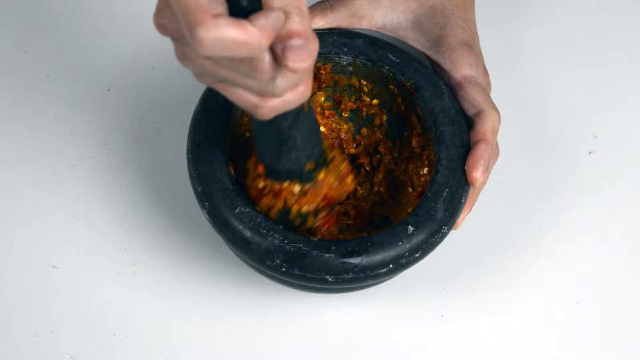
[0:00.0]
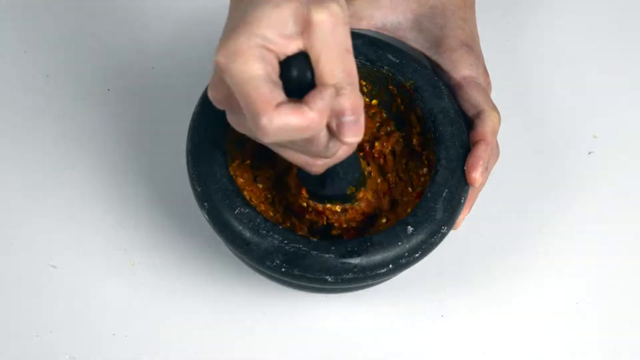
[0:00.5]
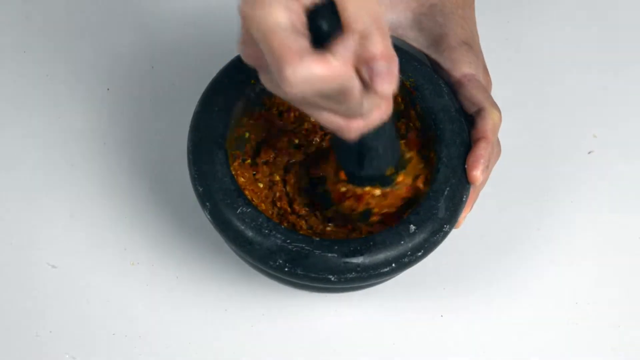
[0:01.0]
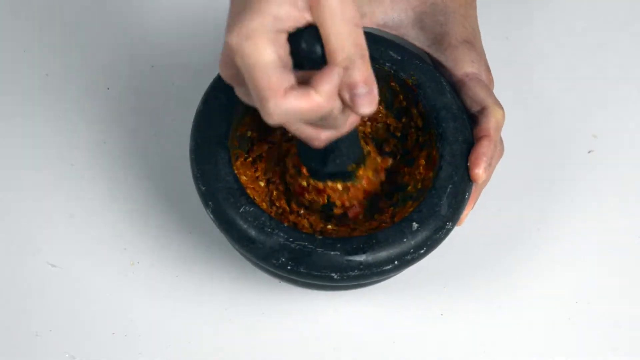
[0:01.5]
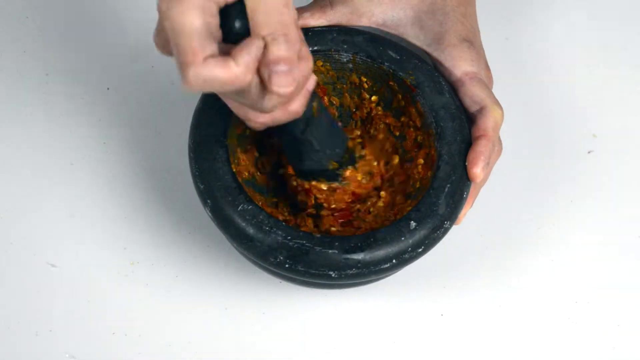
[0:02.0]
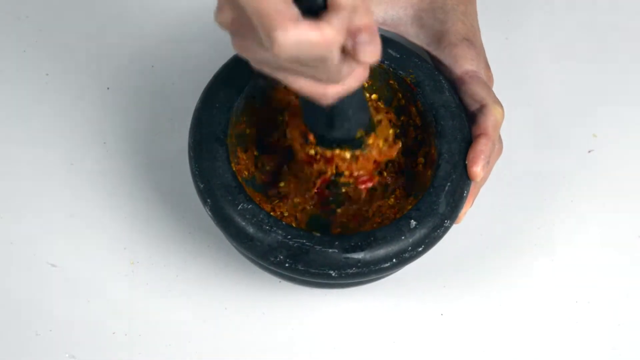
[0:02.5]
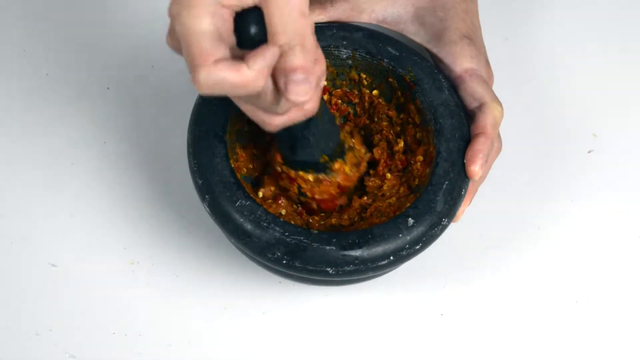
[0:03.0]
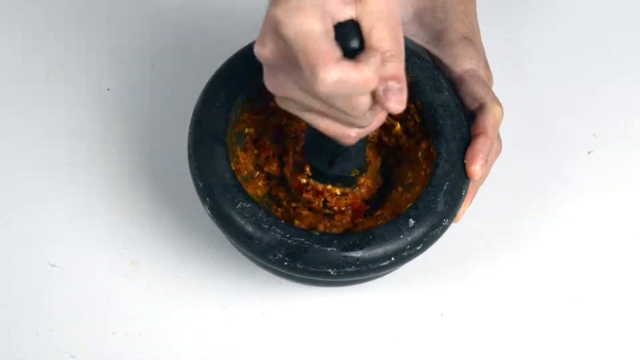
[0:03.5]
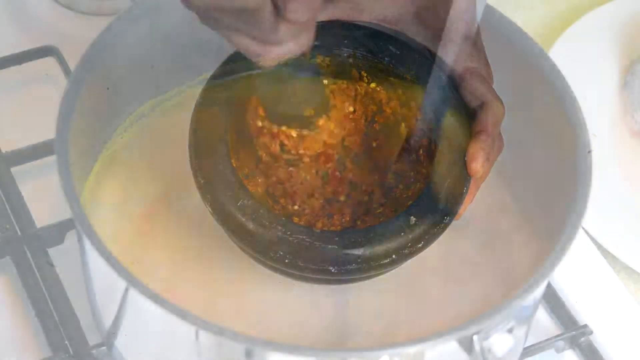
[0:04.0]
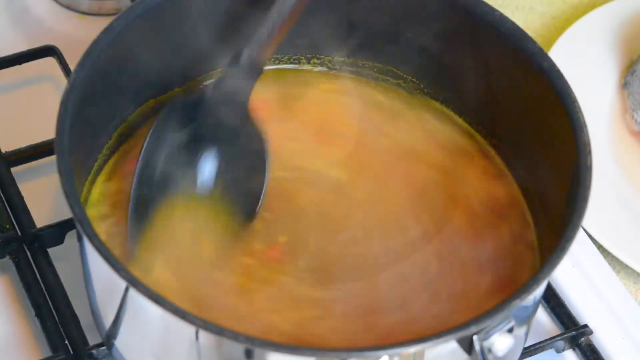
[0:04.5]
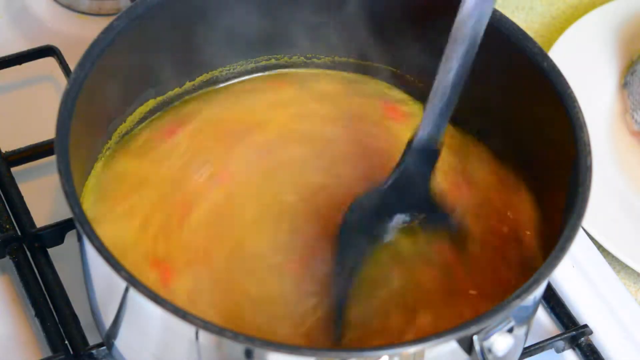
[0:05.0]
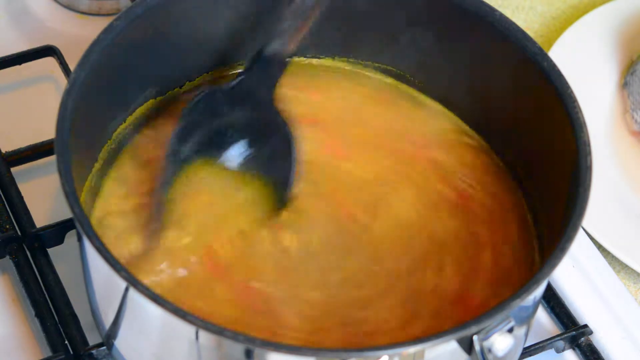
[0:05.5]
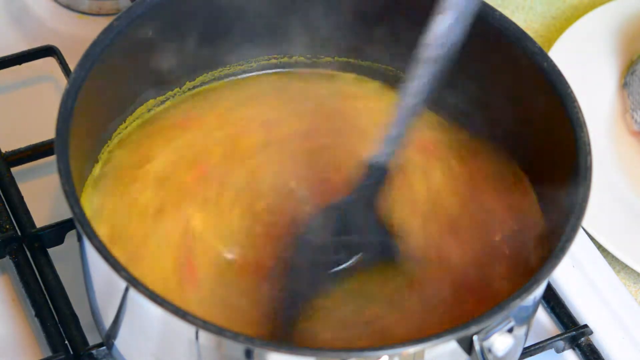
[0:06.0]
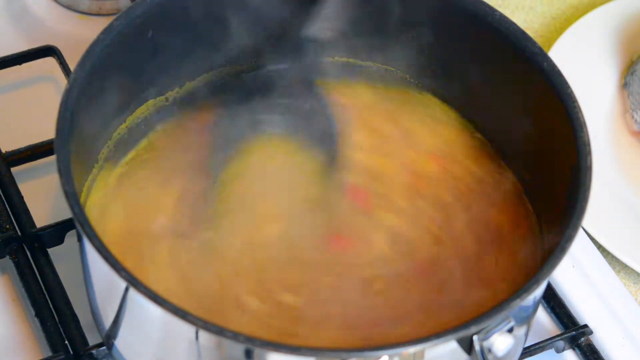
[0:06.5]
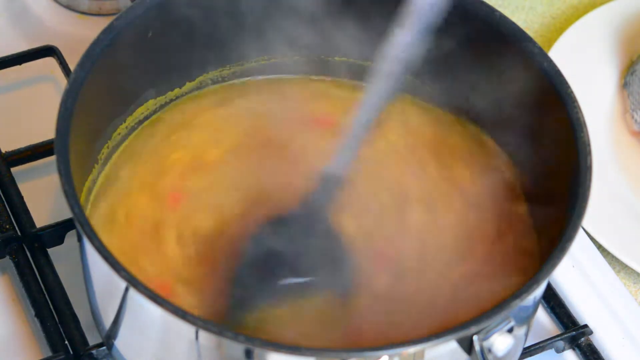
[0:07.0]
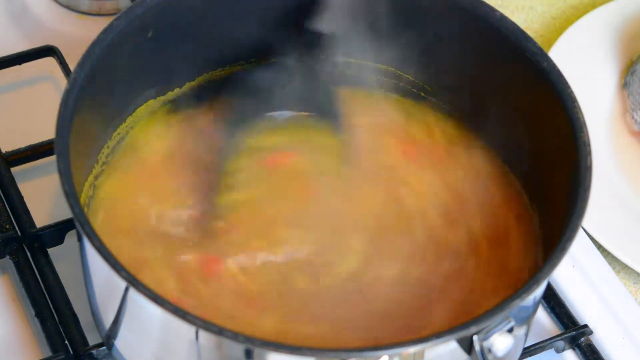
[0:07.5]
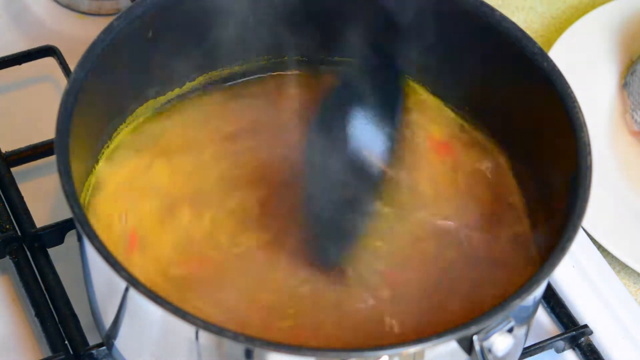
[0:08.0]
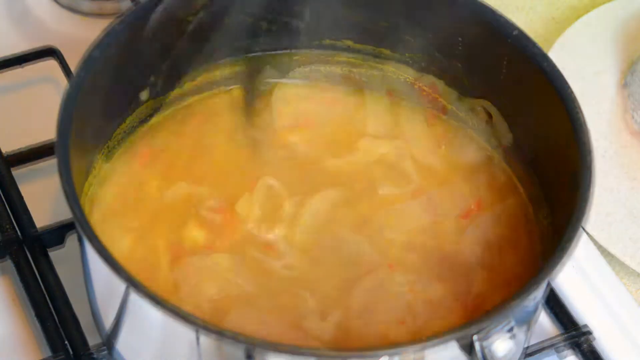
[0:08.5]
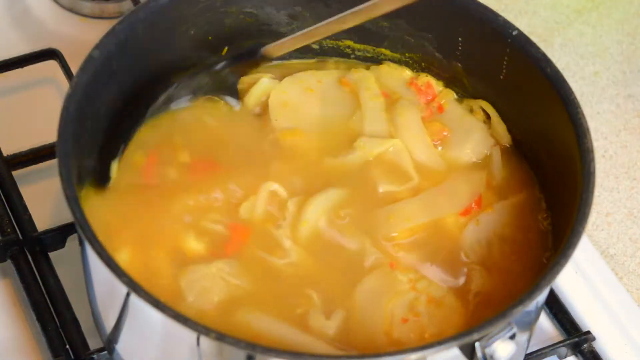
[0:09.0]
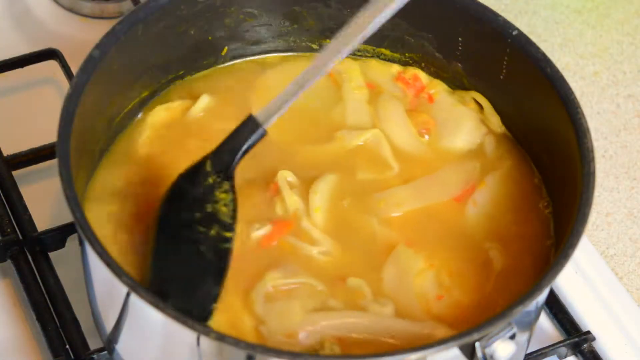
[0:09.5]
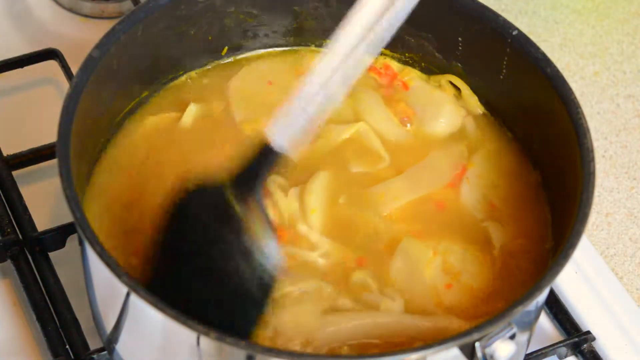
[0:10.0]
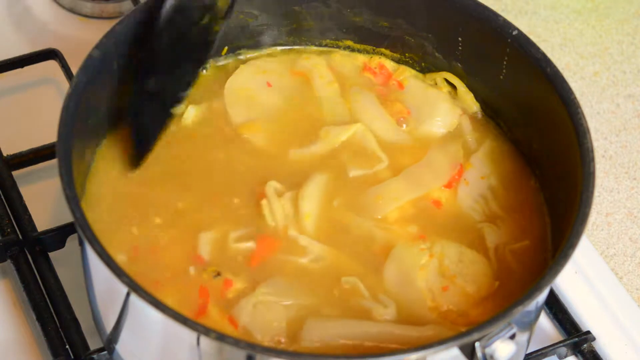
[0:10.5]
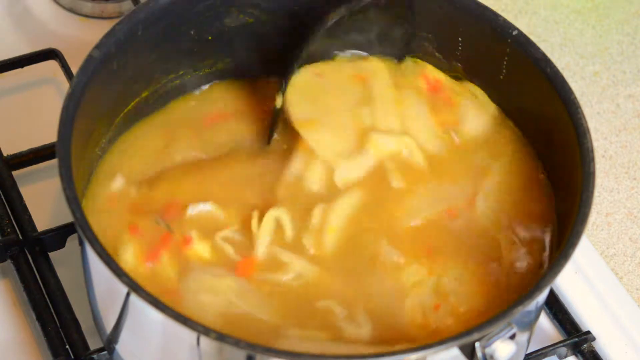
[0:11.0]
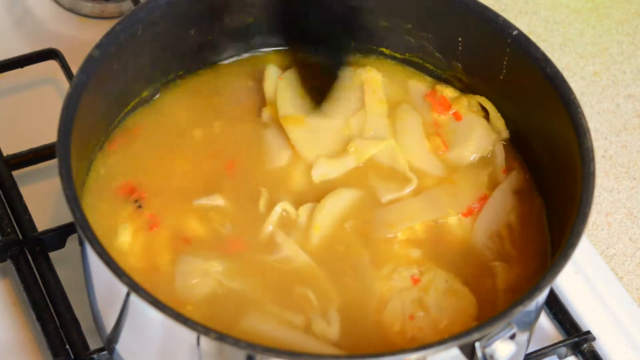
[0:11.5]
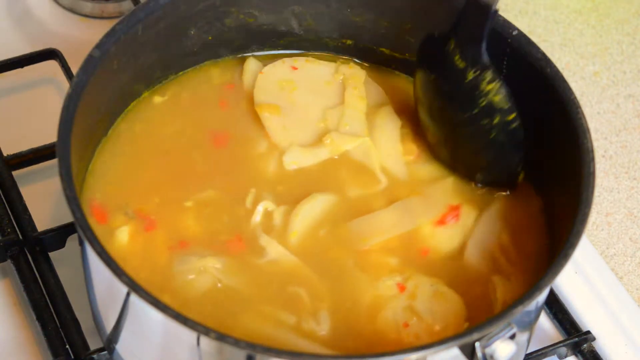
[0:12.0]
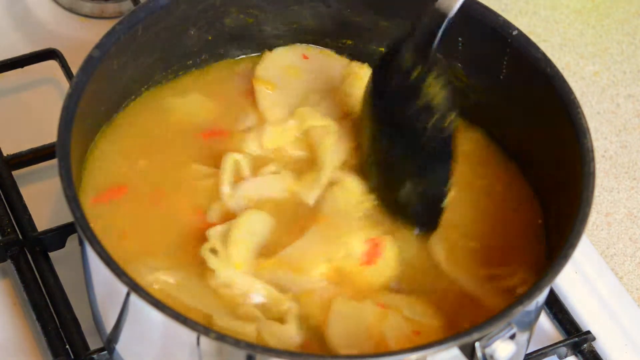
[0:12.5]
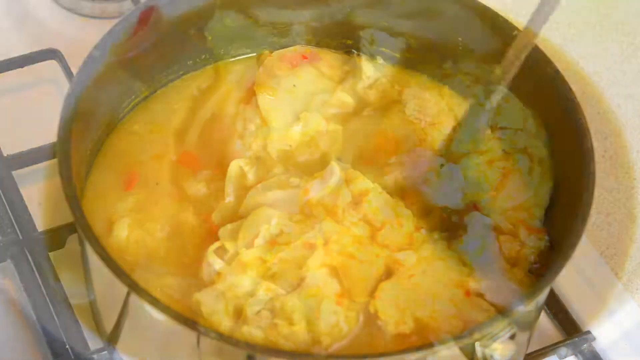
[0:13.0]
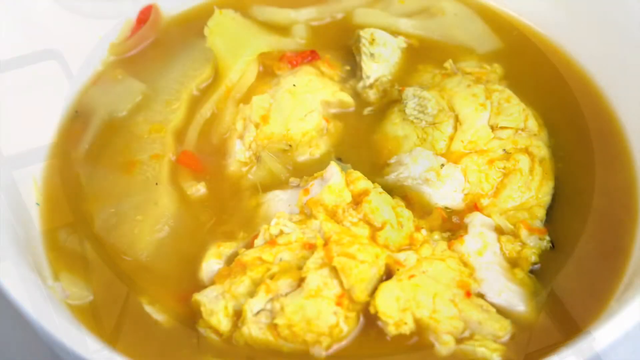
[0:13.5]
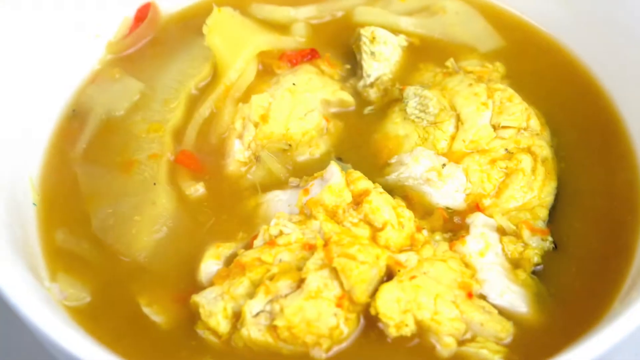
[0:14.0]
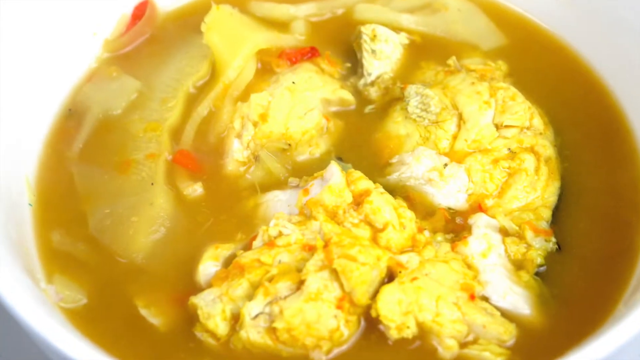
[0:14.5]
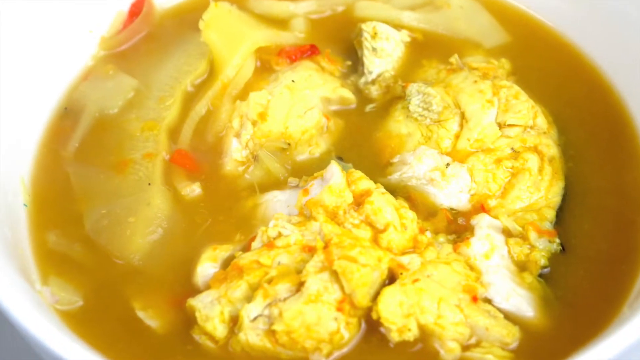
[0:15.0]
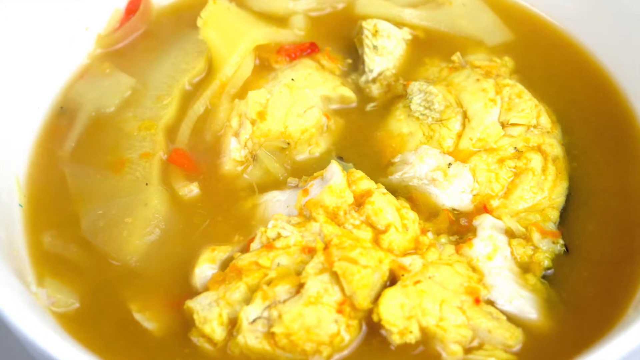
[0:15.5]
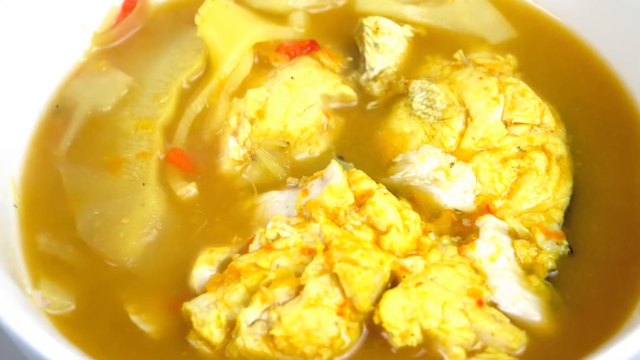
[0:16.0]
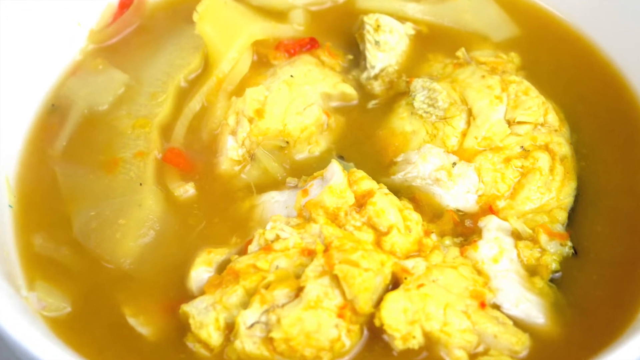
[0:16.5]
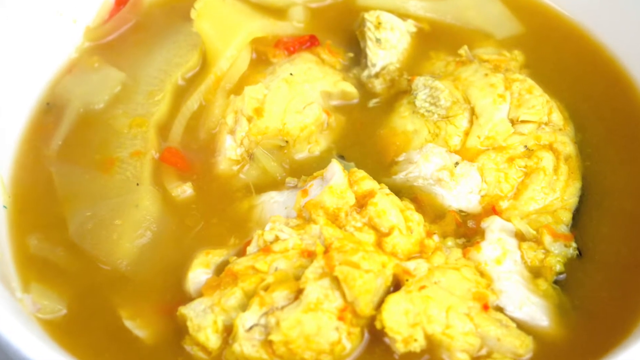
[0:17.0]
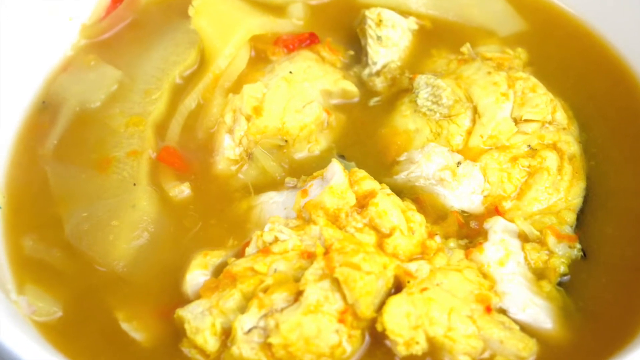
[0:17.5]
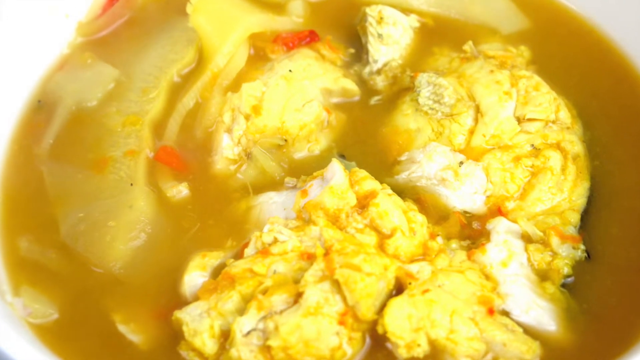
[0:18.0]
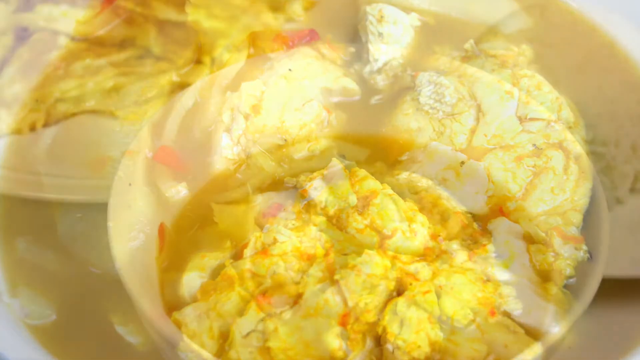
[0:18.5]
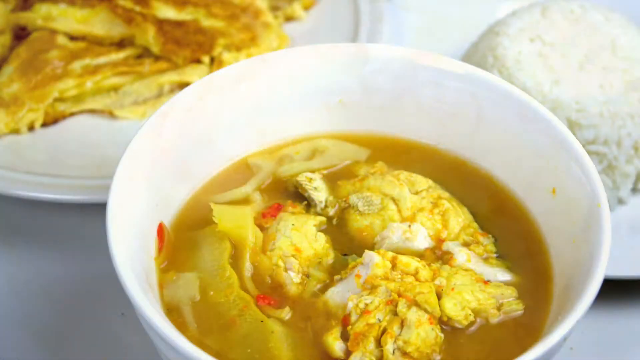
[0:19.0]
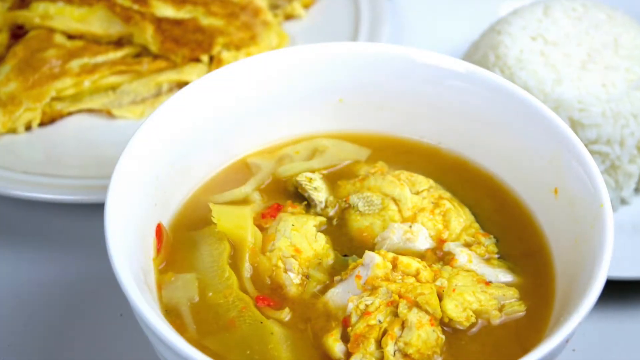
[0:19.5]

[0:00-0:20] A white hand, apparently a man's, uses a black wooden tool to mix a mixture, and he keeps mixing until it is combined. A big silver pot is on a big stove, with some meat and a lot of water in it. He apparently puts the mixture into this pot to combine it so it can cook. In the final view there seems to be meat inside, and there is a flour there. The soup is then dished into a white bowl, with white rice on a white plate next to it. The spoon used to cook it is a big spoon in two colors, black and silver.